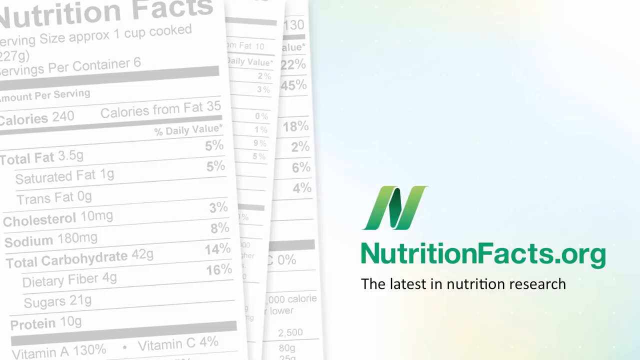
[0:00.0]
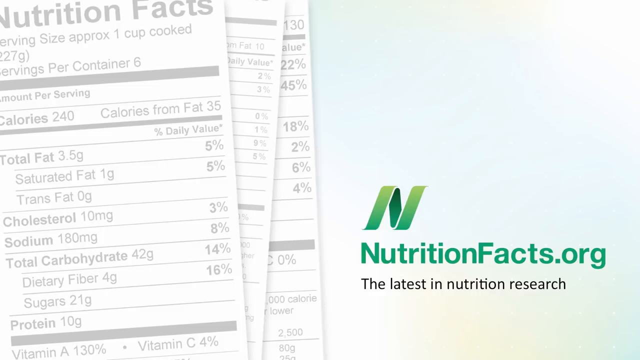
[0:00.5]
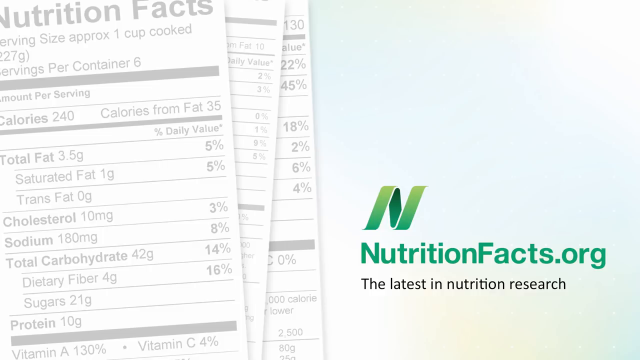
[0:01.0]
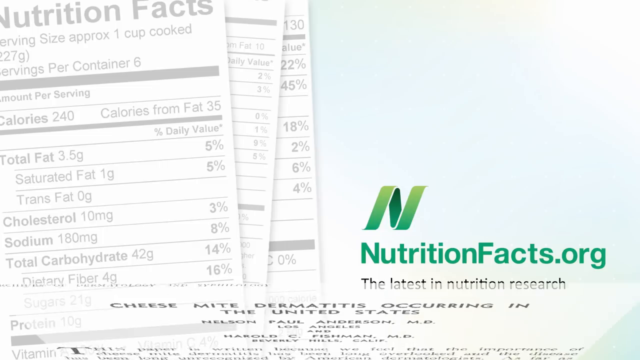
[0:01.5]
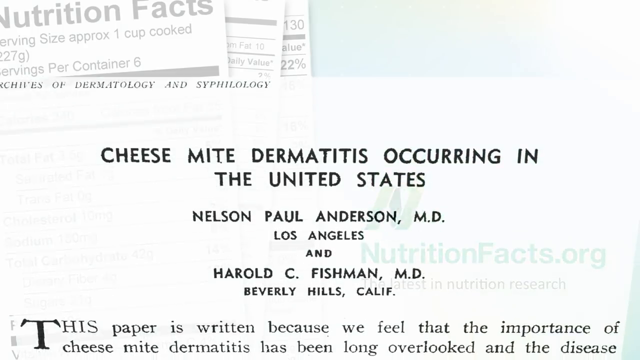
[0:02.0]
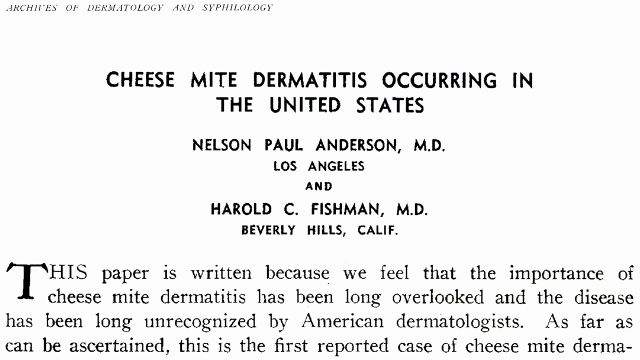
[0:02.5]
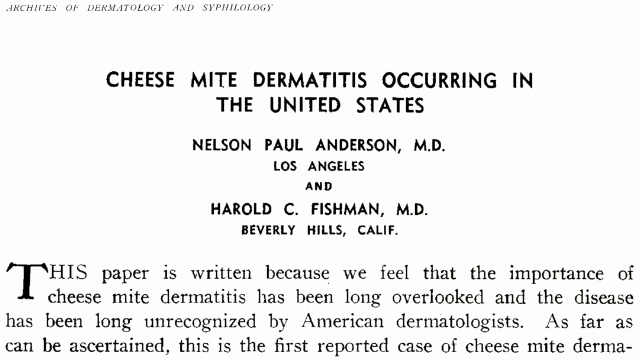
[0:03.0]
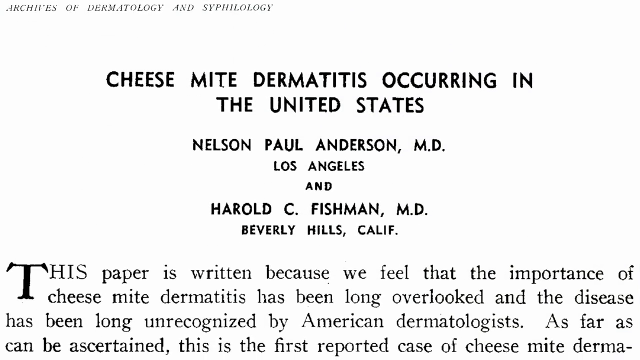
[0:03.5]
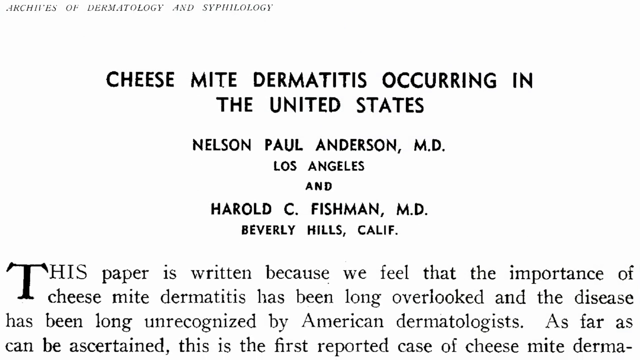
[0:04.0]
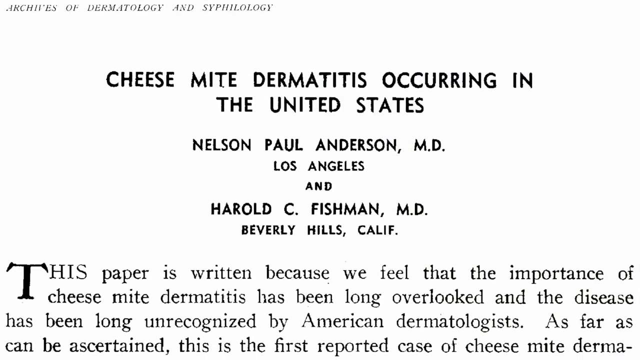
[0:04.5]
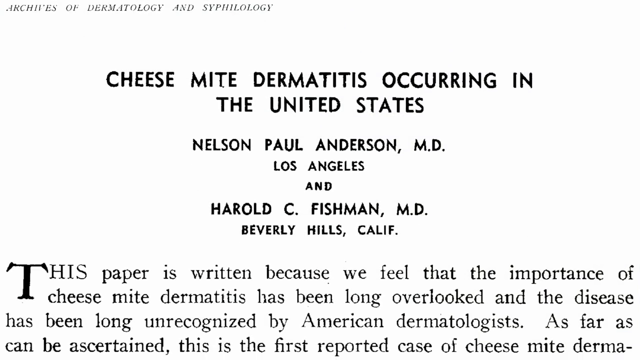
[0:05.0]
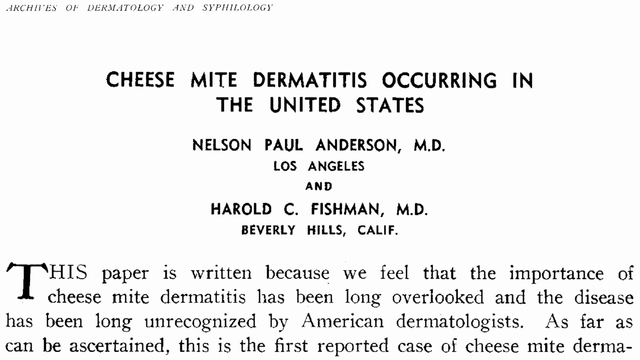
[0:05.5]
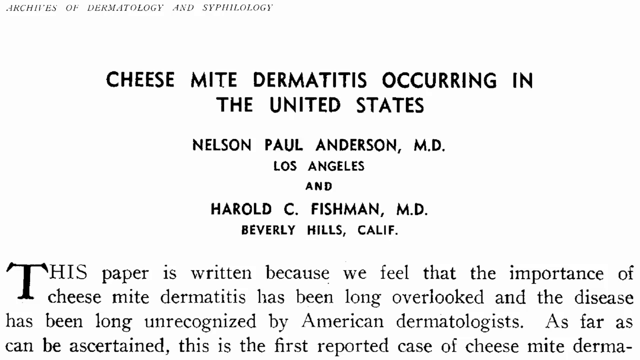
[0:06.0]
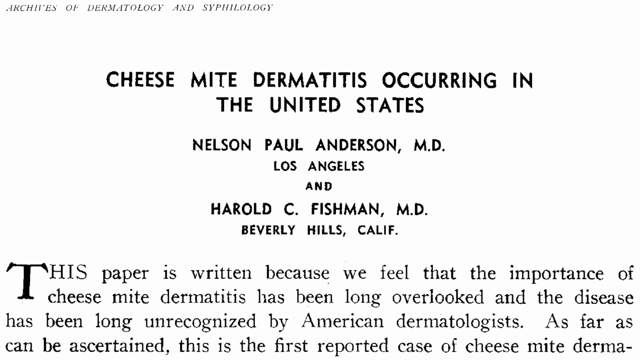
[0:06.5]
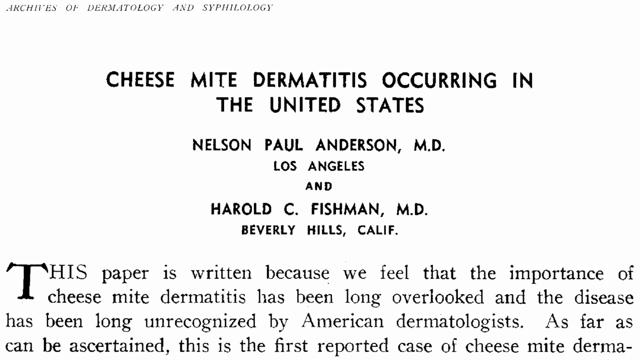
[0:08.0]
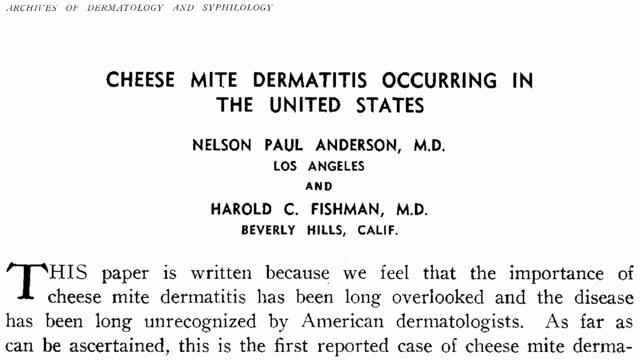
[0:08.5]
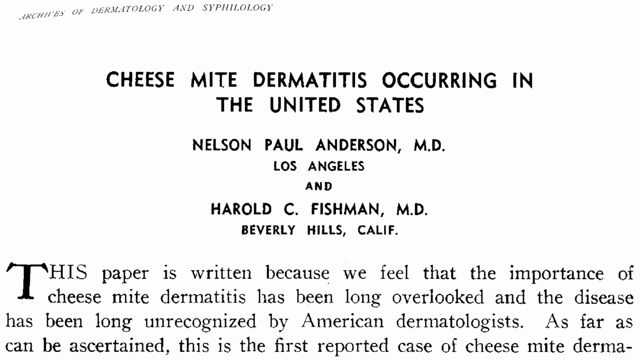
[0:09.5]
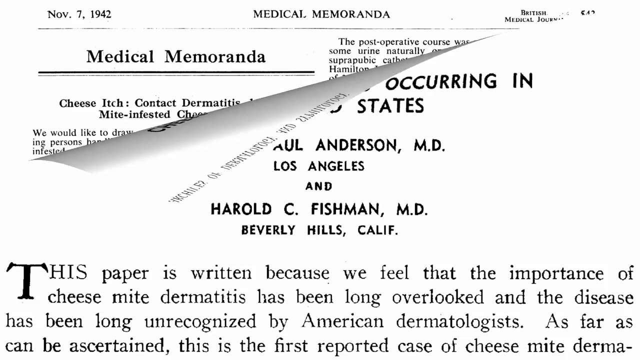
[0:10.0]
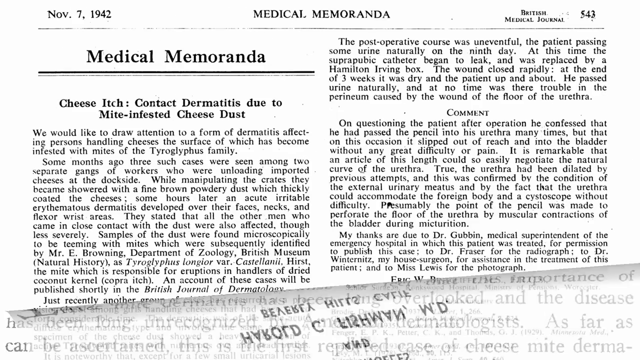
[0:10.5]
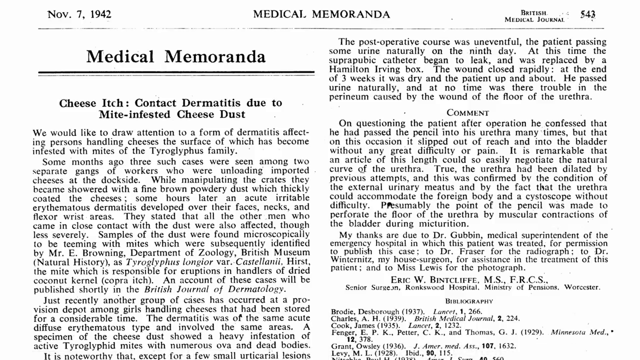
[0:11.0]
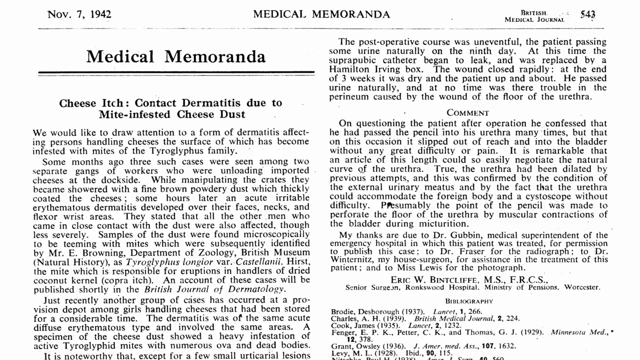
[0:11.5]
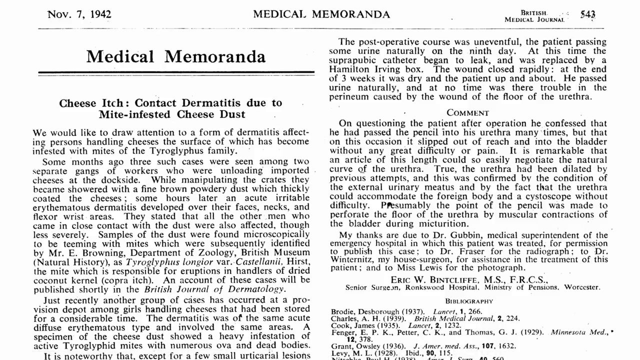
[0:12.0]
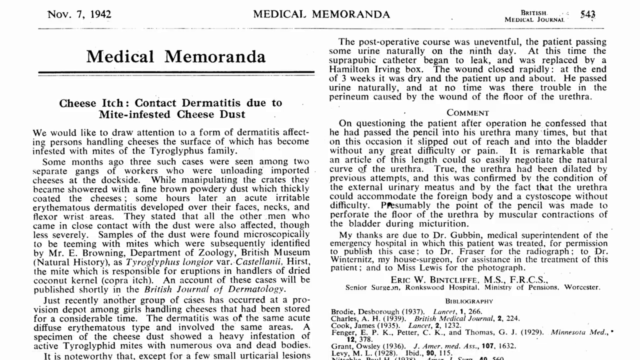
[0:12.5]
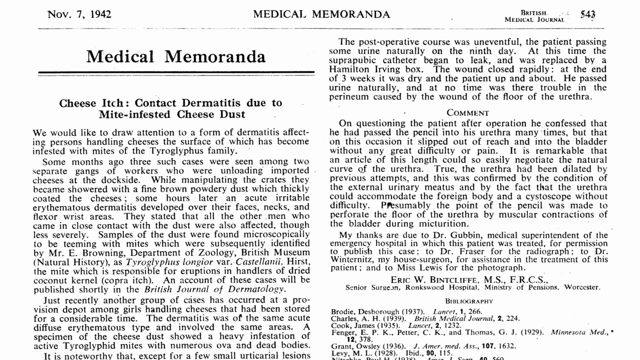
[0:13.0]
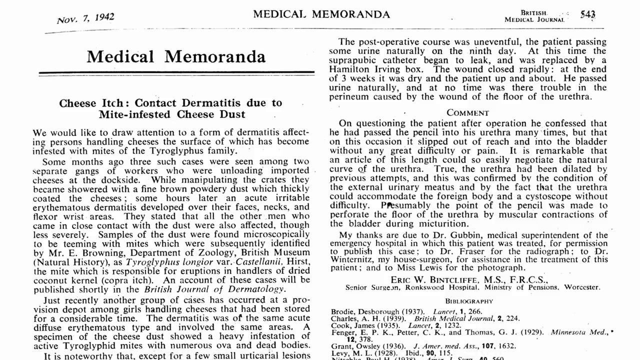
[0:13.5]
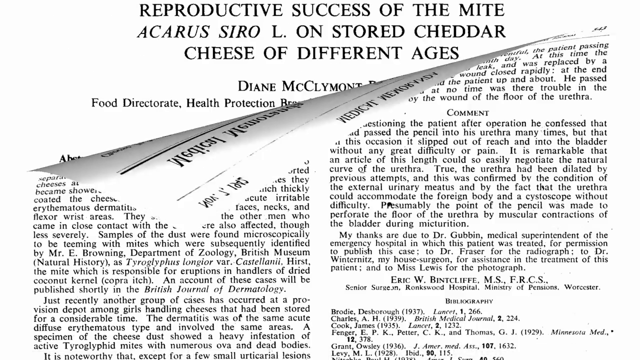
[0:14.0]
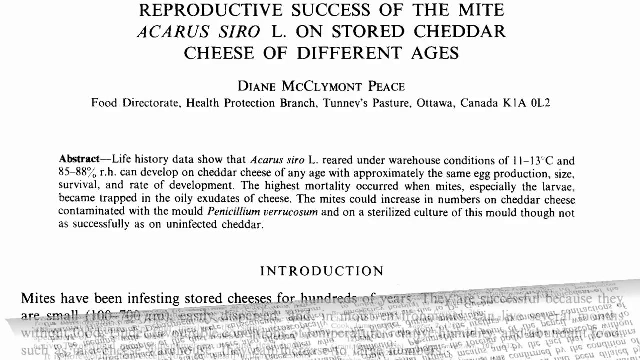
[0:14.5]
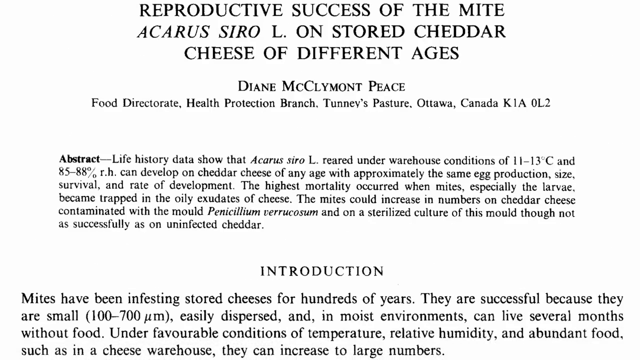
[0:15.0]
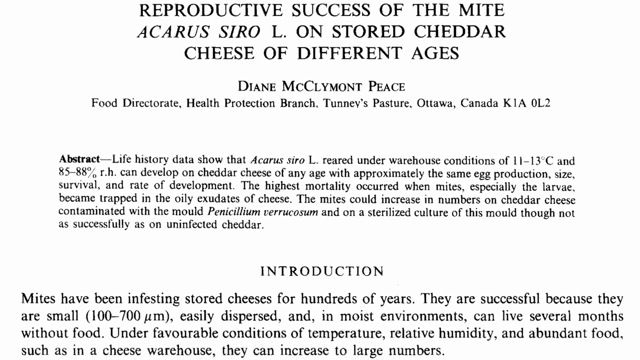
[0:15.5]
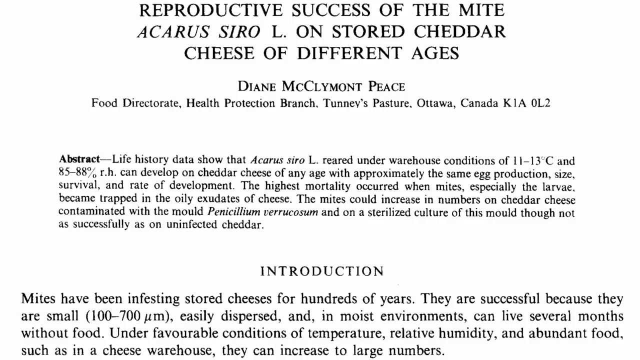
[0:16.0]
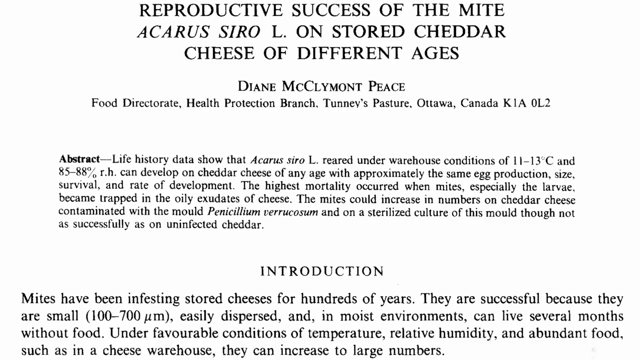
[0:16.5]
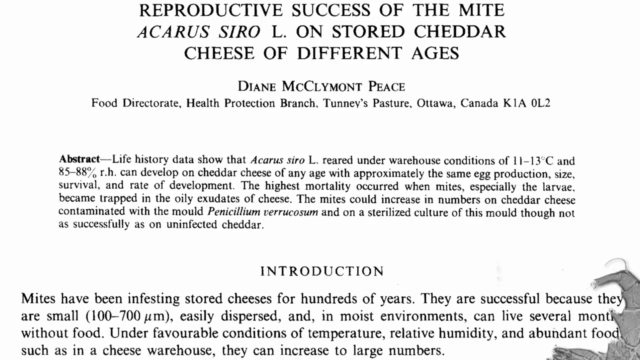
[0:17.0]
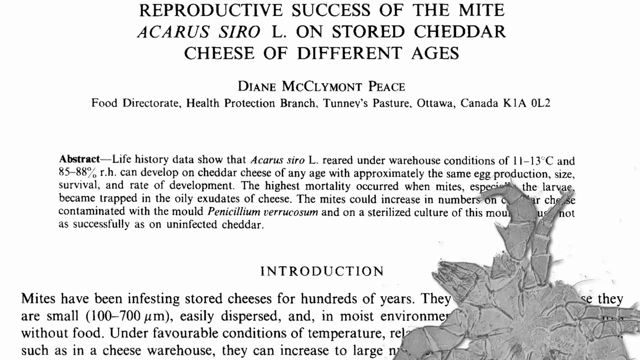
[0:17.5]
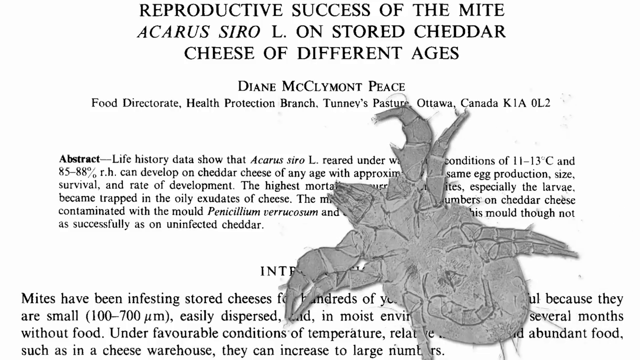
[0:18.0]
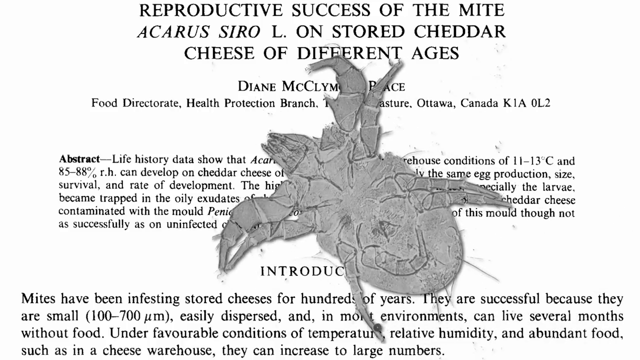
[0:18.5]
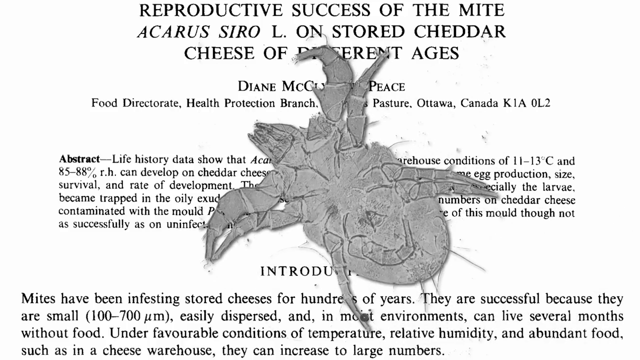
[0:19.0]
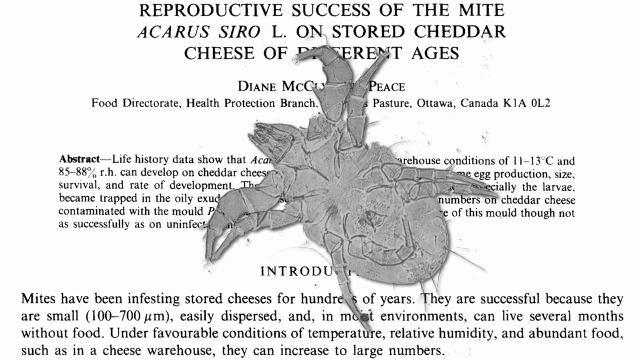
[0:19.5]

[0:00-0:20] Three different nutrition labels are stacked on top of each other on the left side of the screen, while the right side shows a blank white page that is brighter in the top right corner. A green URL for the website nutritionfacts.org is displayed. An article appears that says "cheese mite Dermatitis occurring in the United States," written by Nelson Paul Anderson, MD, and Harold C. Fishman, MD. The page is flipped away, leaving the inside of the article underneath, with the title "medical memoranda" and "cheese itch contact dermatitis due to mite infested cheese dust." On the right side of the screen, the page number 543 and the text "British Medical Journal" are displayed; on the left side is the date "November 7, 1942."